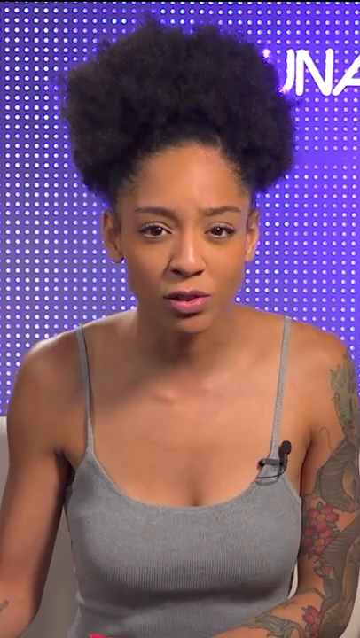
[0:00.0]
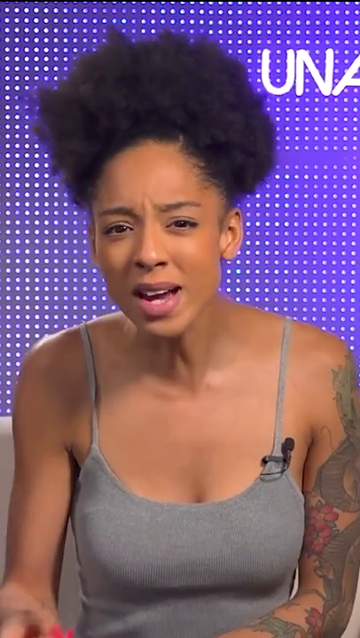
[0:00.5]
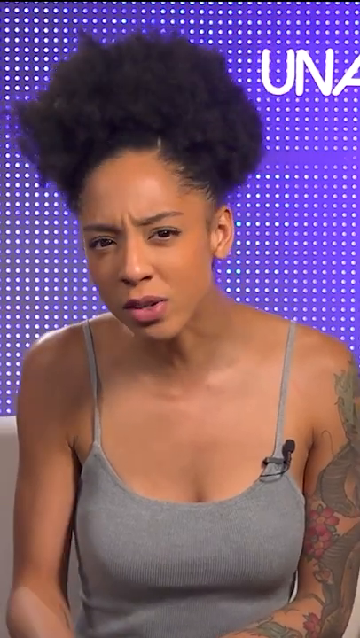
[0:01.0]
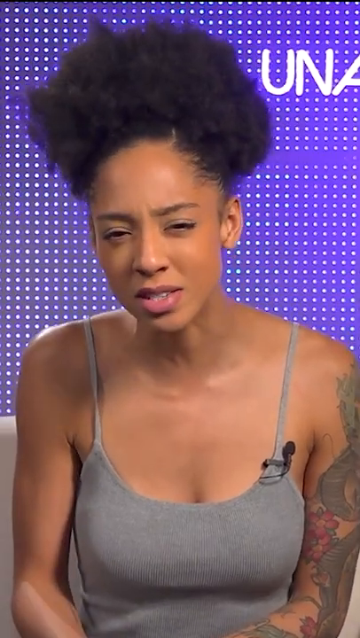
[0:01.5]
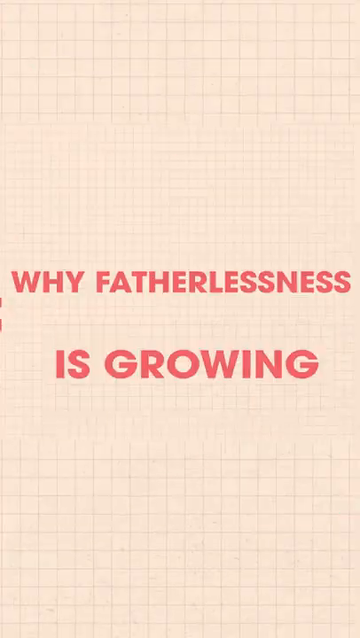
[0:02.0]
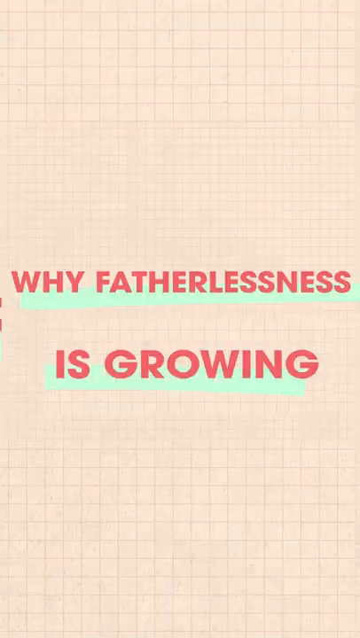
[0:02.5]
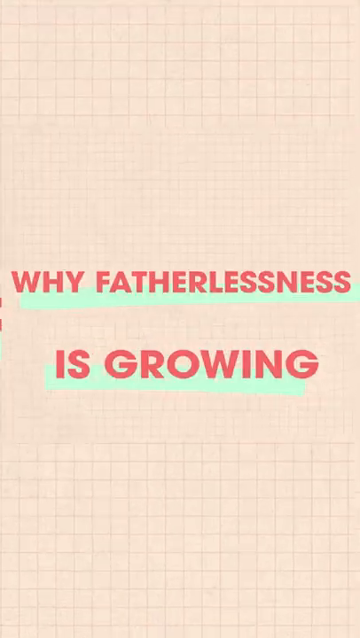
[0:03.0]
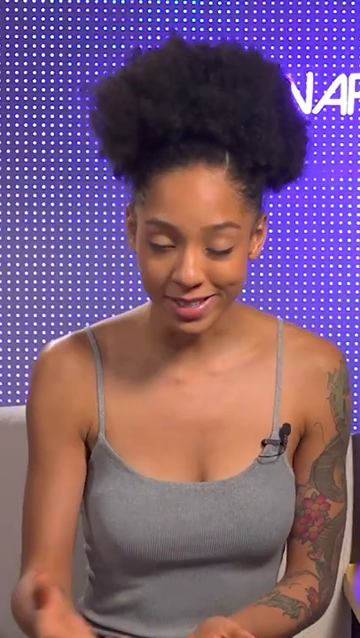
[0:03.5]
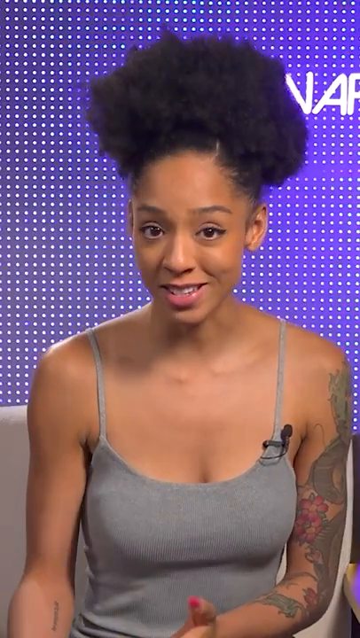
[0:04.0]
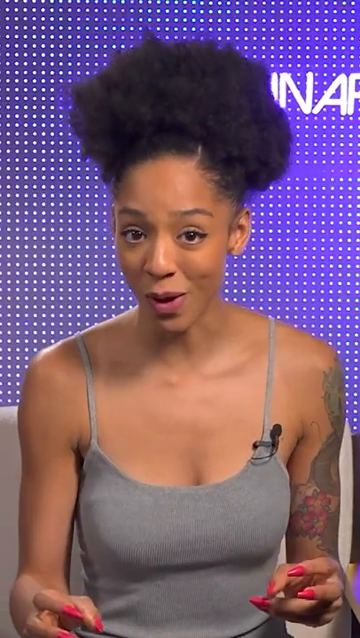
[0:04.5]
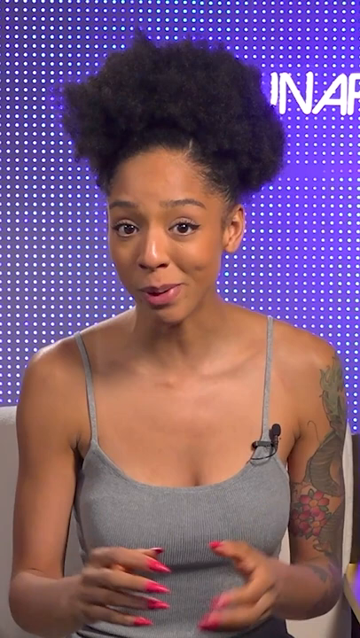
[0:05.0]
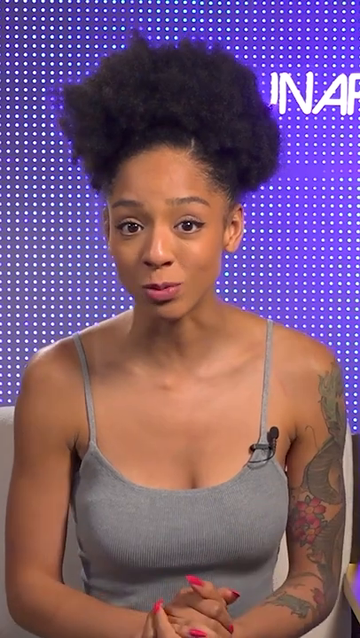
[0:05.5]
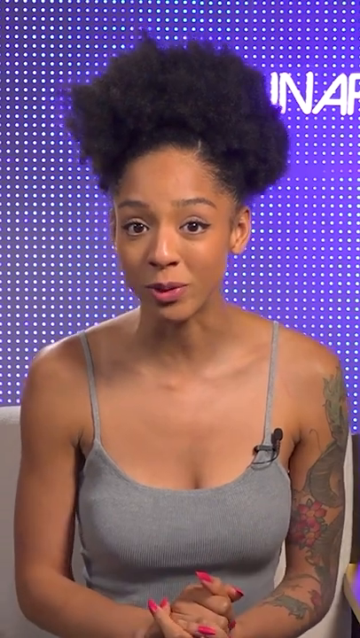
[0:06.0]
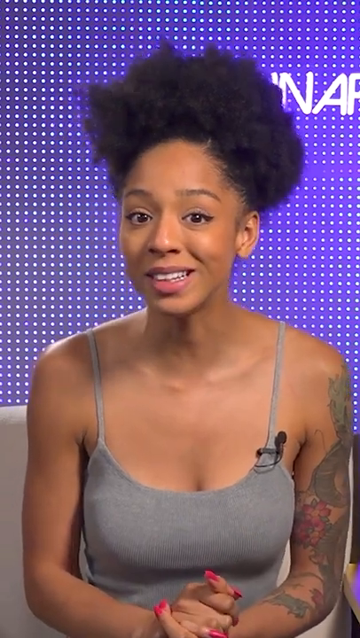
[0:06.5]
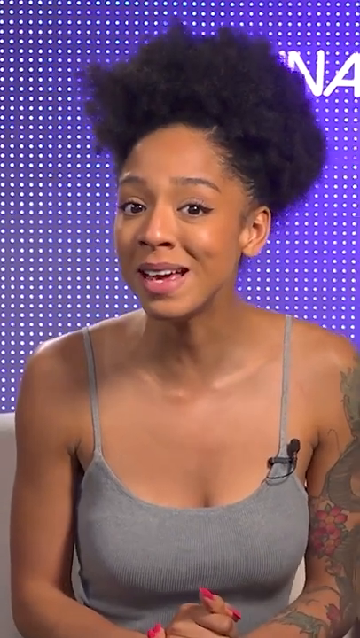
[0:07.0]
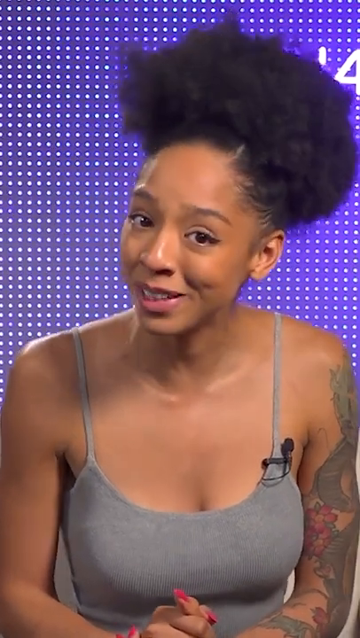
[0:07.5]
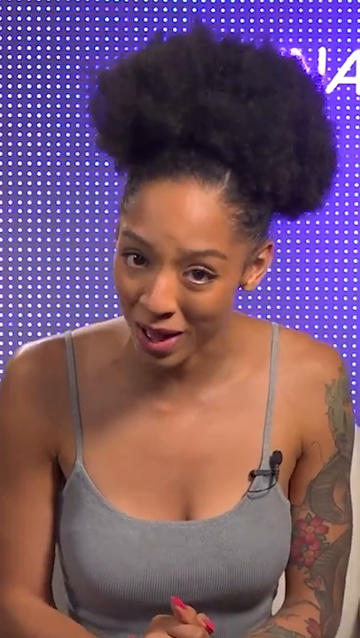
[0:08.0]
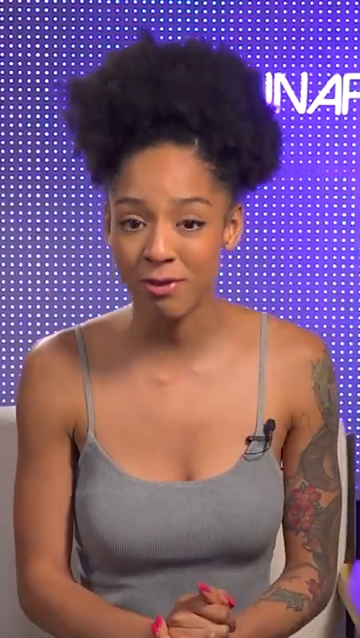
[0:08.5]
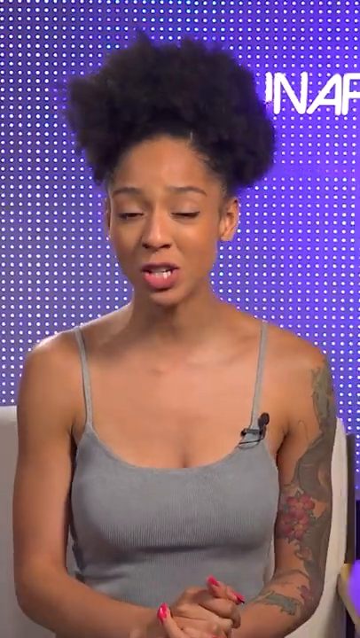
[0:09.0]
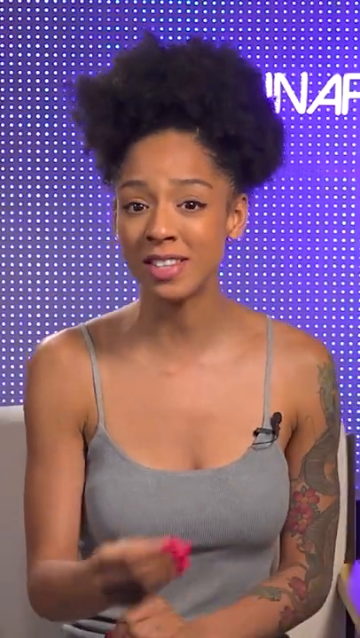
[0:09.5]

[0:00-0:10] A young woman, apparently Black, appears in a news story with the on-screen text "why fatherlessness is growing." She wears a gray tank top, her left arm is full of tattoos, and she has a crop-top haircut. Behind her is a lavender background with white dots. Some unreadable letters appear on the right side of the screen, up by her hair. A microphone is on her, apparently on her left shoulder. She seems to be introducing the subject.